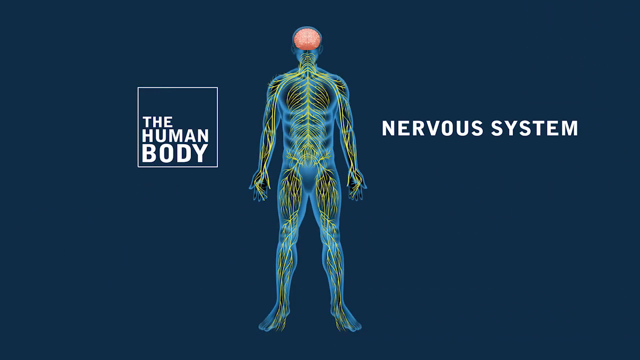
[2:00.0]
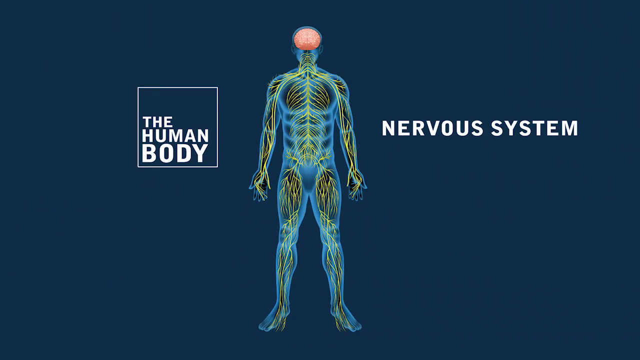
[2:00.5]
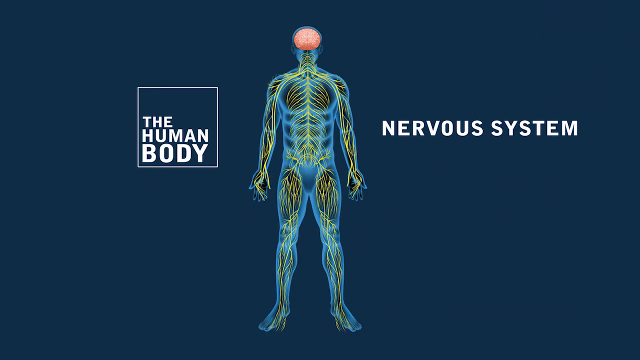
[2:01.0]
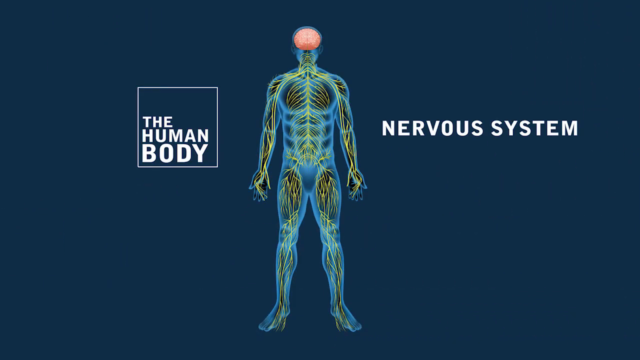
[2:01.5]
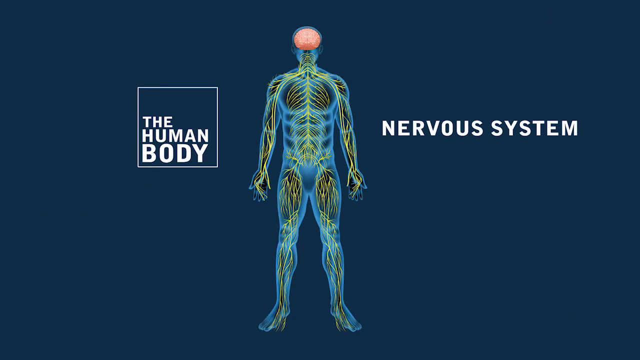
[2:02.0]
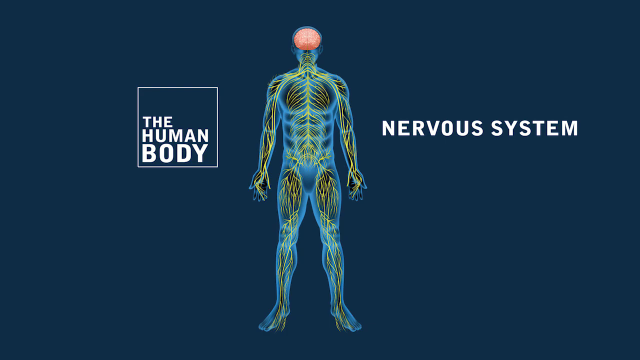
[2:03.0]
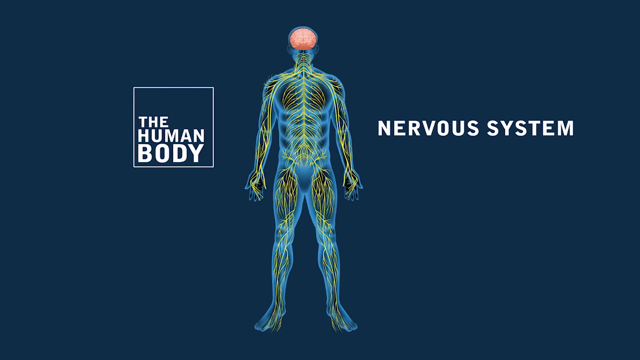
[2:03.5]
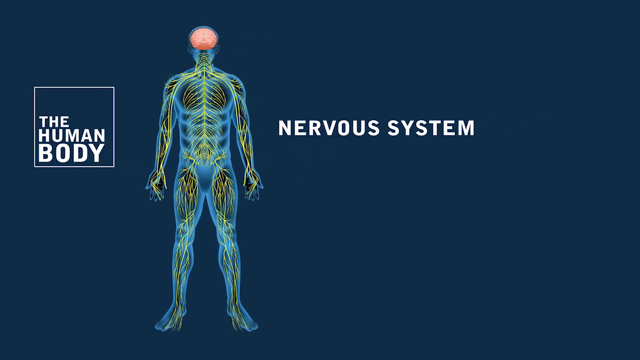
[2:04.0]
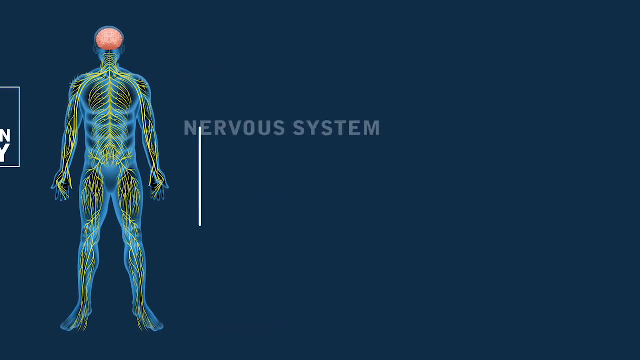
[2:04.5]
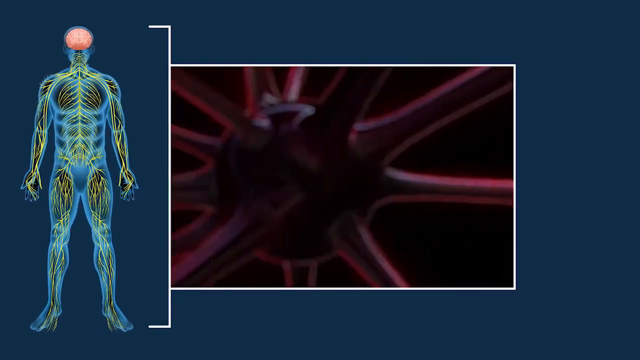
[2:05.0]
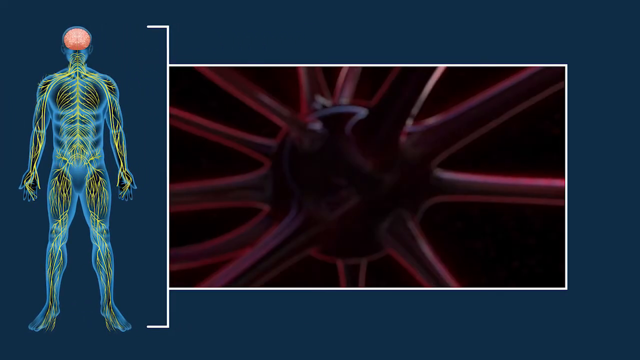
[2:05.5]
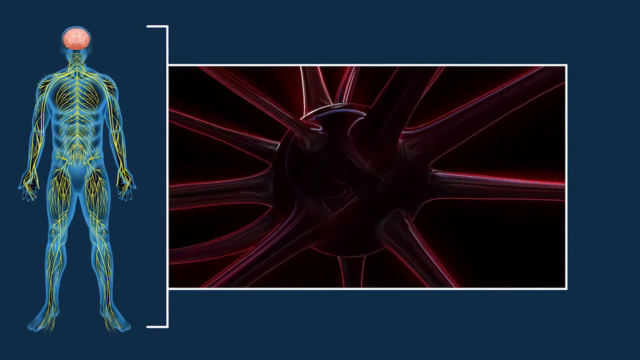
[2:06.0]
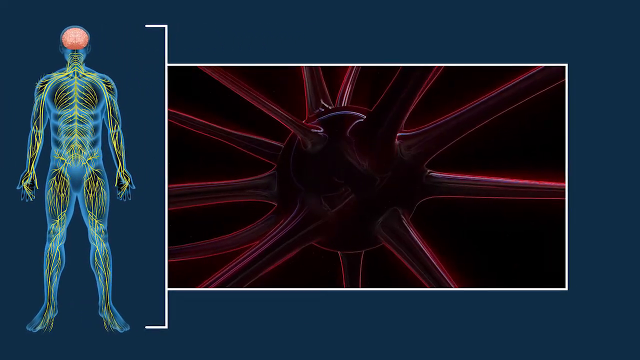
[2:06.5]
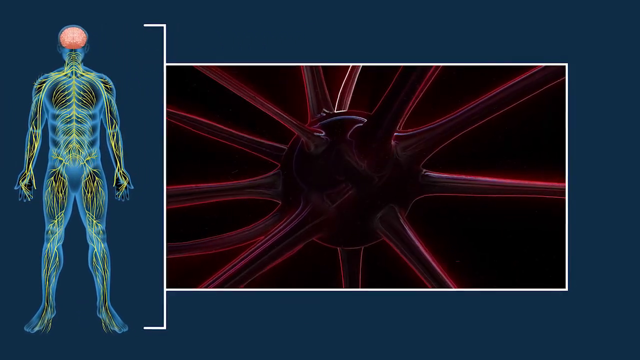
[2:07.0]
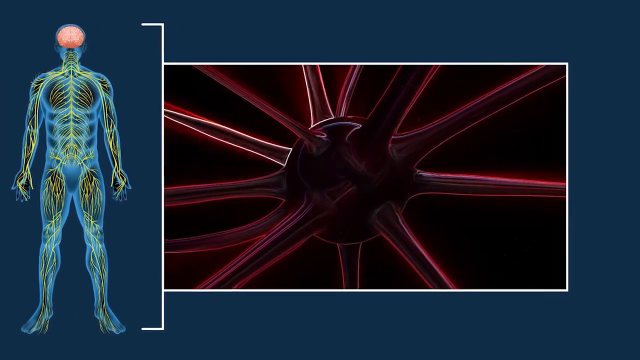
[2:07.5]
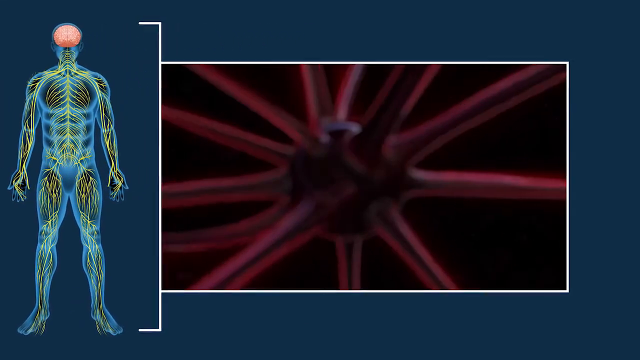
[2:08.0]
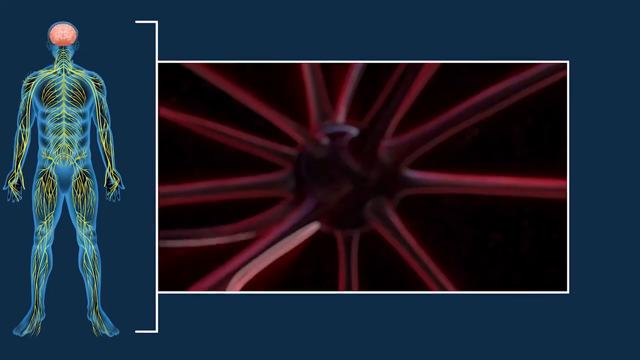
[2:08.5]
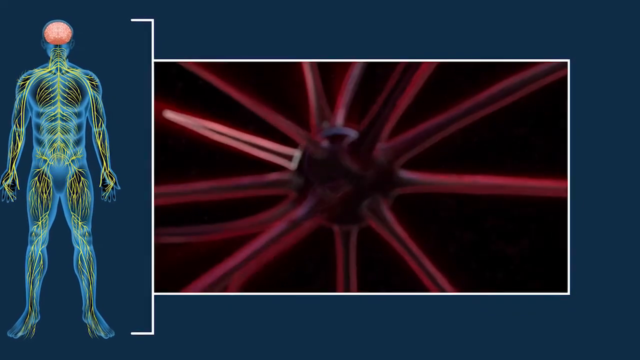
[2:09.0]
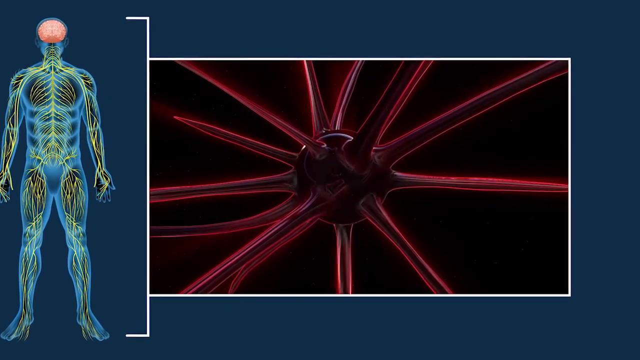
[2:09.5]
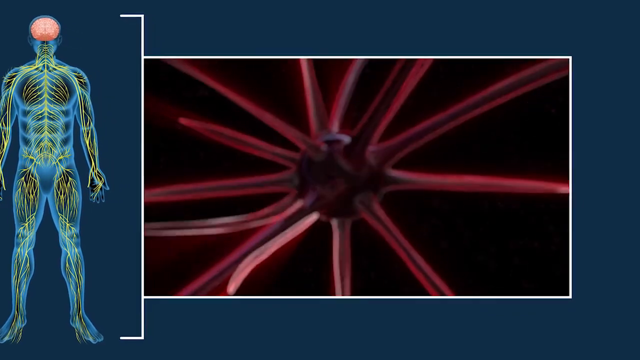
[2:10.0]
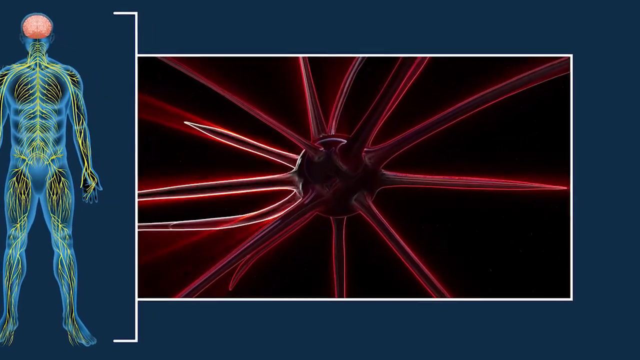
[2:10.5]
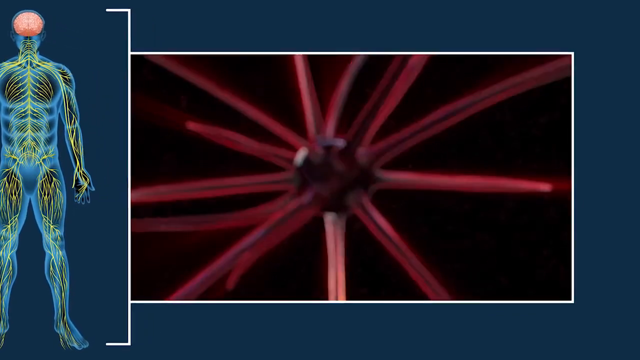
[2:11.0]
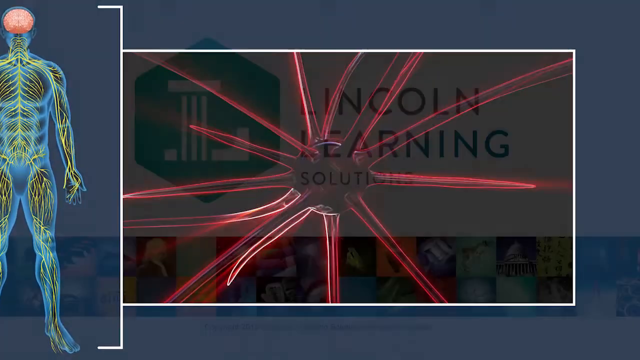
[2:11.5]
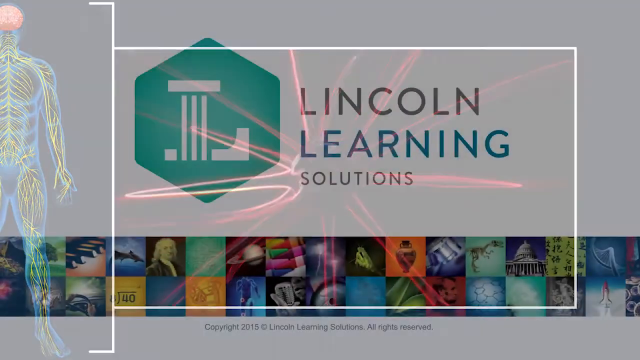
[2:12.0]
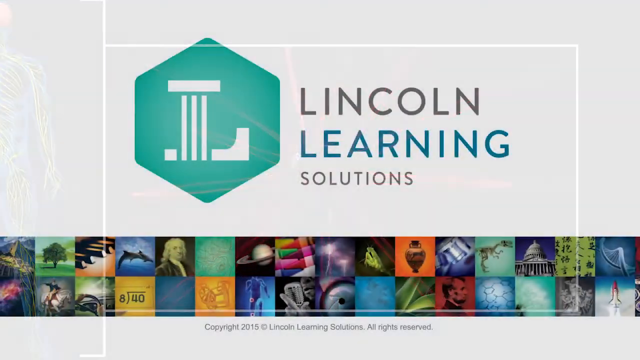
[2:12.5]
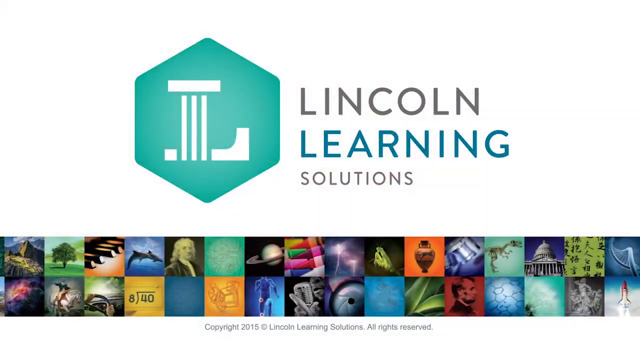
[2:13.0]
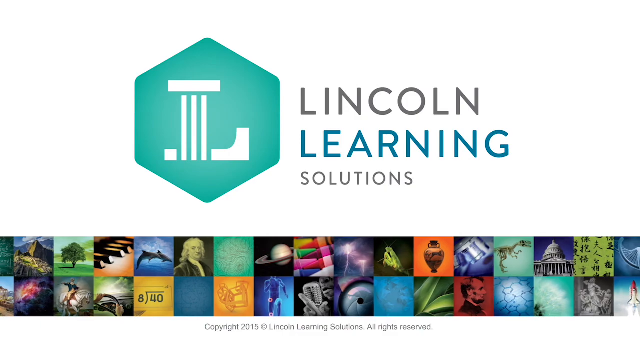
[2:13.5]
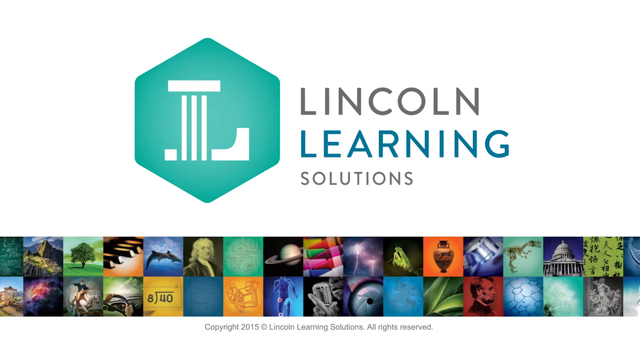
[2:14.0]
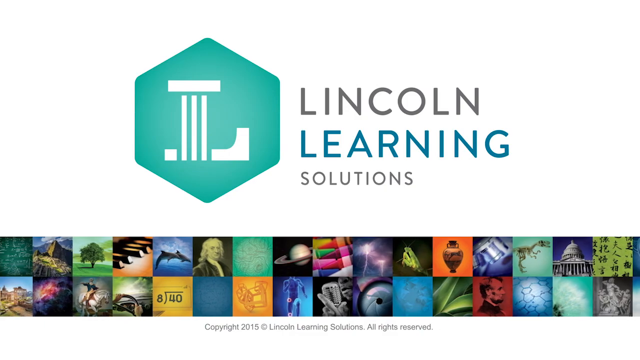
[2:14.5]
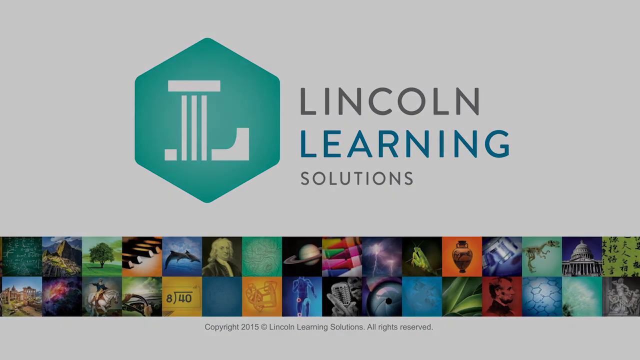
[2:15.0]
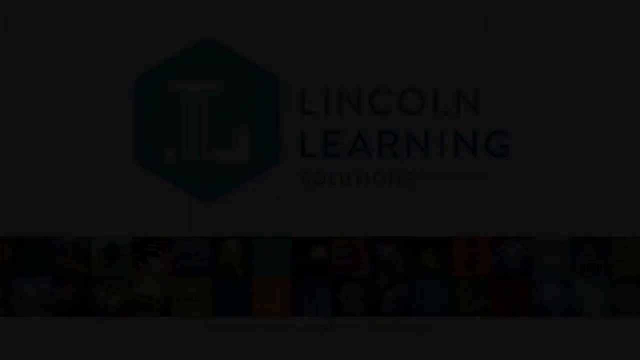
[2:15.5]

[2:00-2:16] The screen stays on that image for a few seconds, then slides off to the left. Next, the image of the skeleton with the brain appears on the left-hand side, and on the right-hand side is a white-bordered area with a black background. In its centre is a black circle with black and pink spikes coming off it, and the camera zooms in and out of this section. The video then goes to a screen with a branding logo on the left: an "L" in a hexagon shape on a blue background. To the right of it is "Lincoln Learning Solutions", and at the bottom are the same block pictures seen on the first screen.